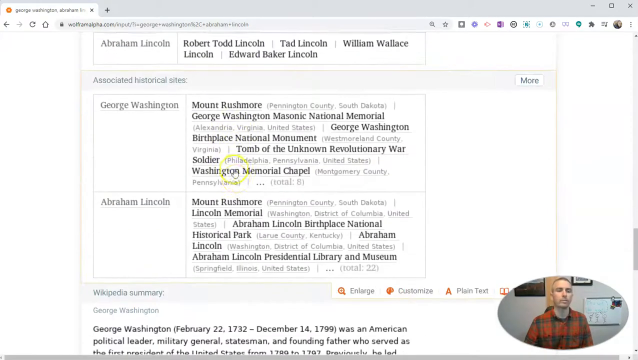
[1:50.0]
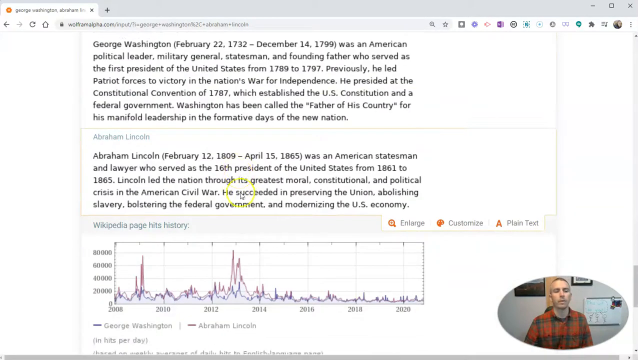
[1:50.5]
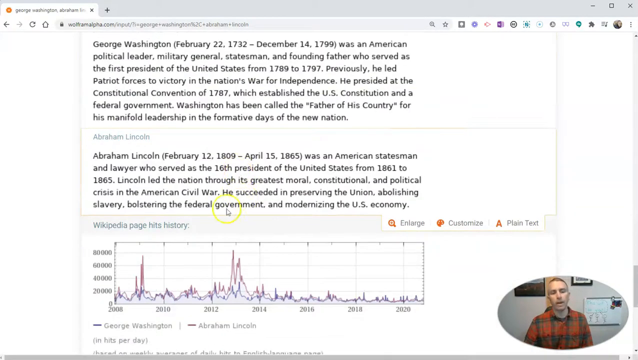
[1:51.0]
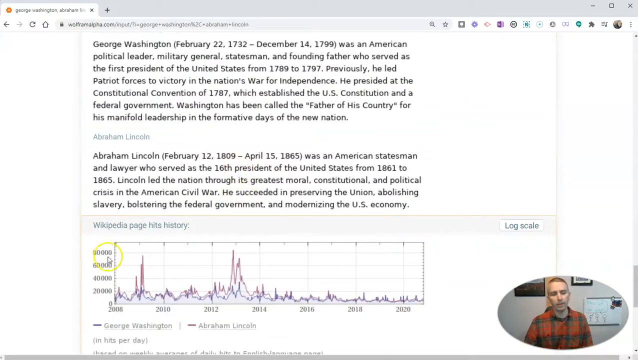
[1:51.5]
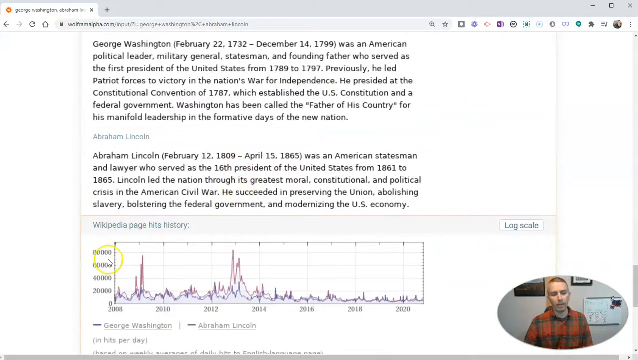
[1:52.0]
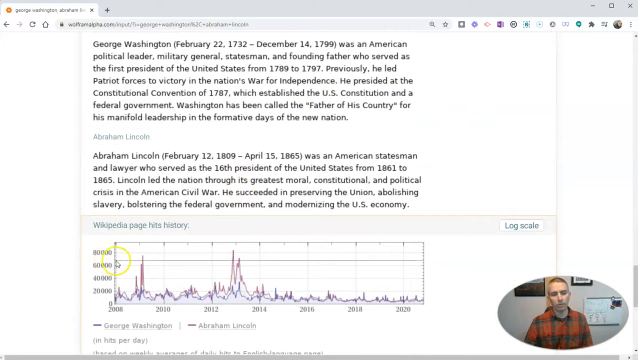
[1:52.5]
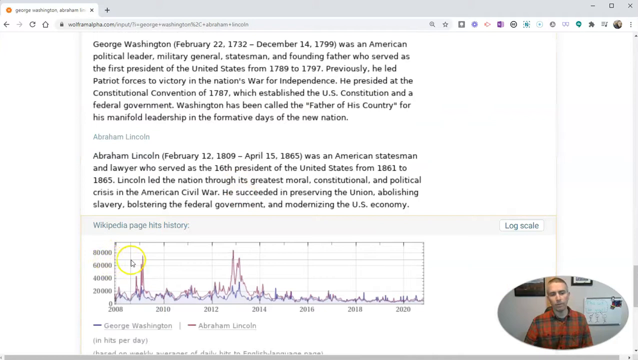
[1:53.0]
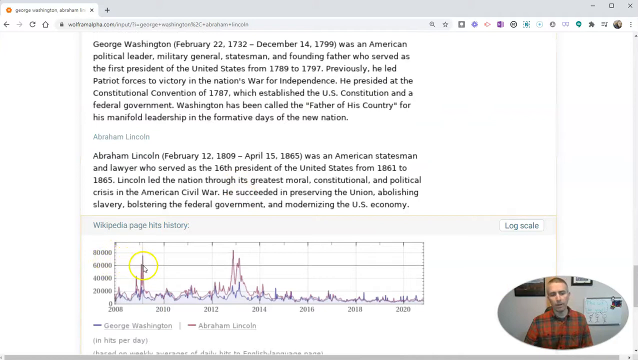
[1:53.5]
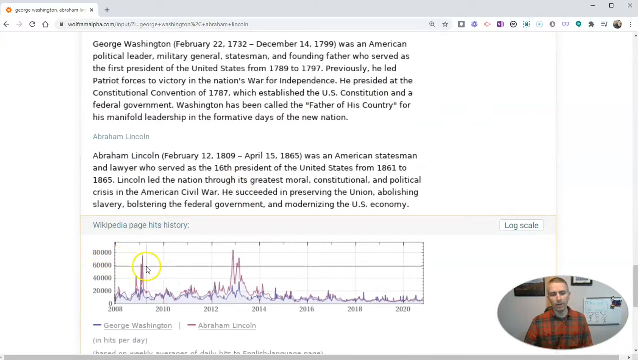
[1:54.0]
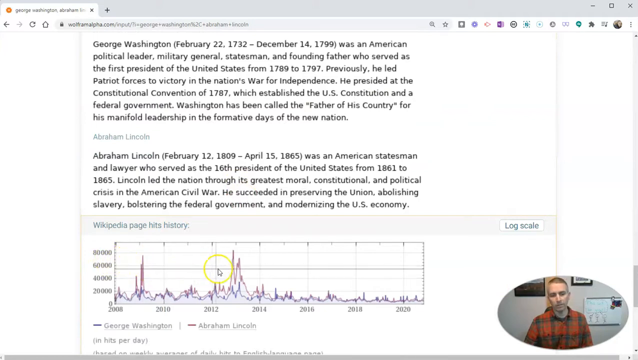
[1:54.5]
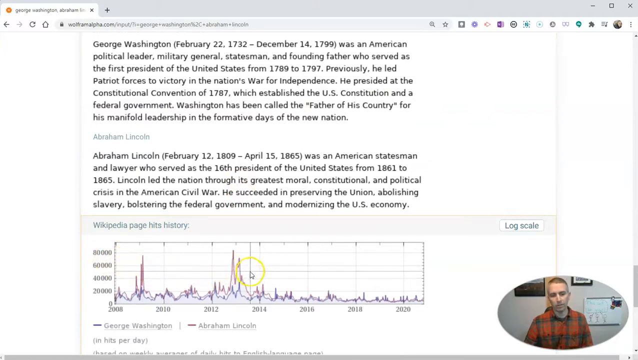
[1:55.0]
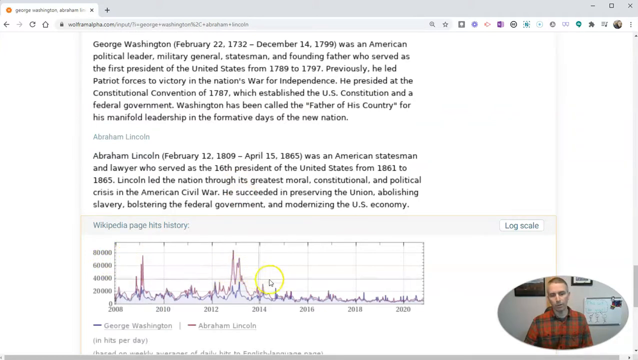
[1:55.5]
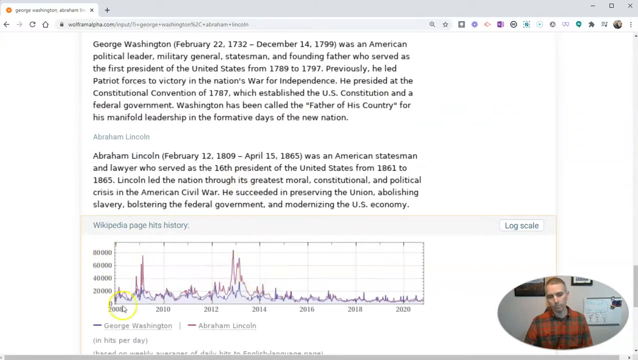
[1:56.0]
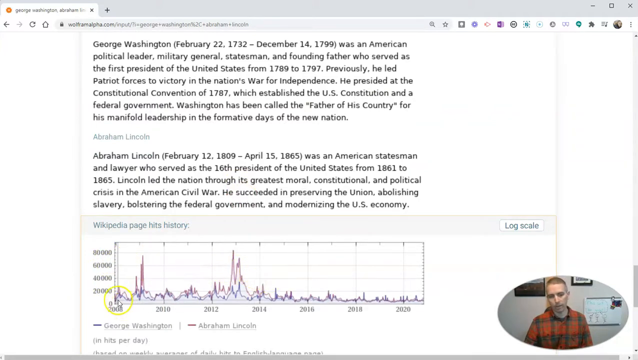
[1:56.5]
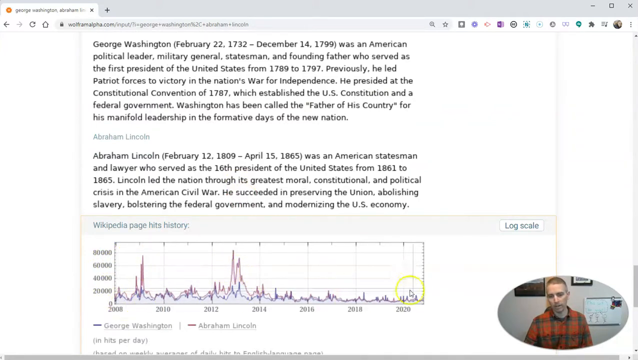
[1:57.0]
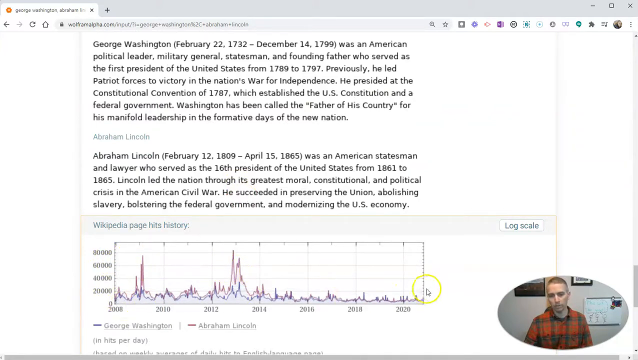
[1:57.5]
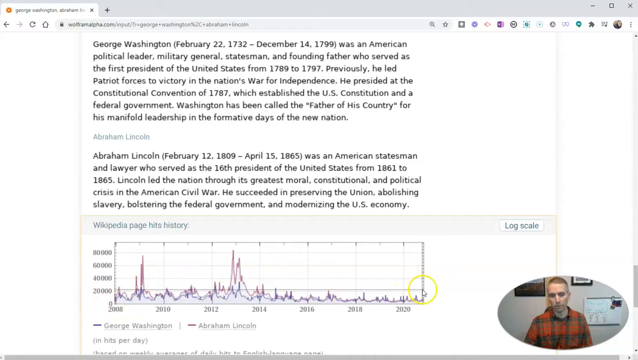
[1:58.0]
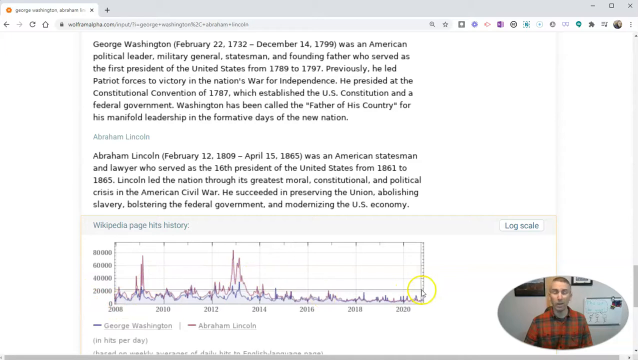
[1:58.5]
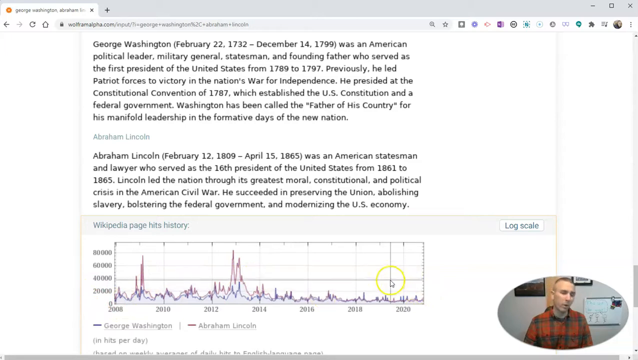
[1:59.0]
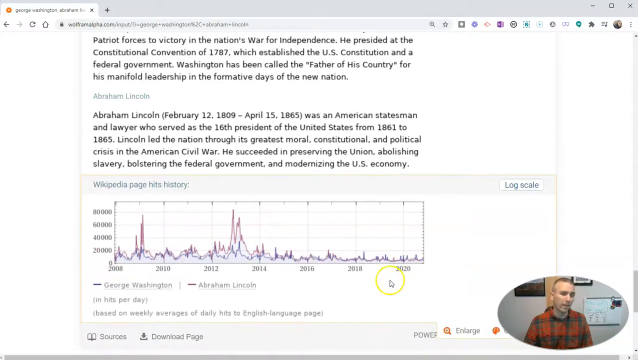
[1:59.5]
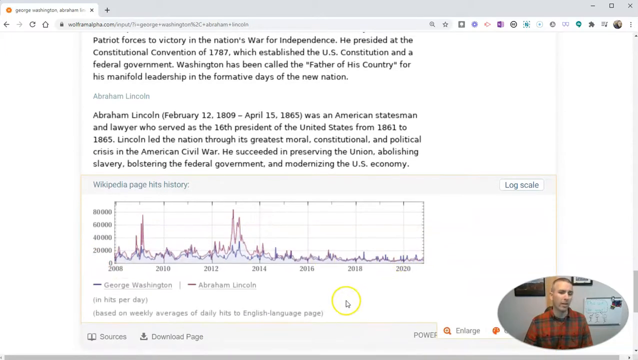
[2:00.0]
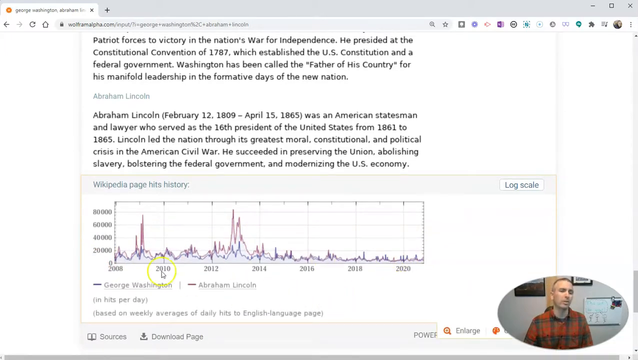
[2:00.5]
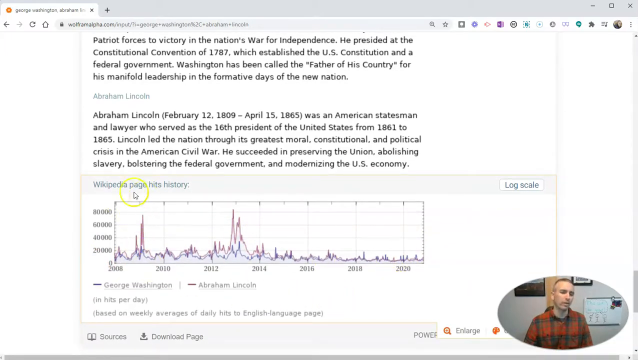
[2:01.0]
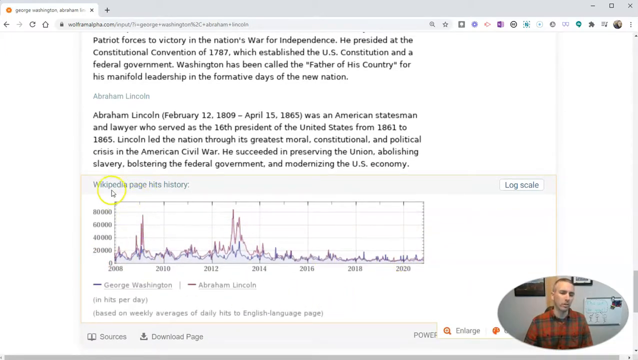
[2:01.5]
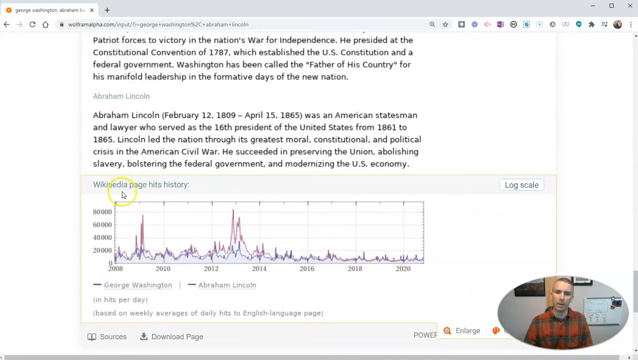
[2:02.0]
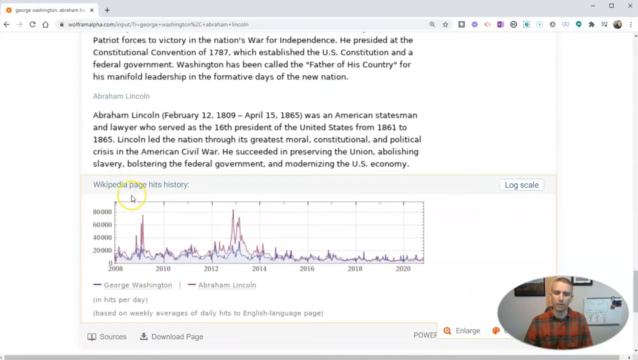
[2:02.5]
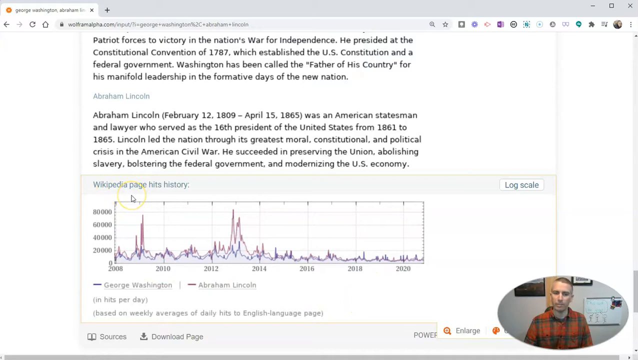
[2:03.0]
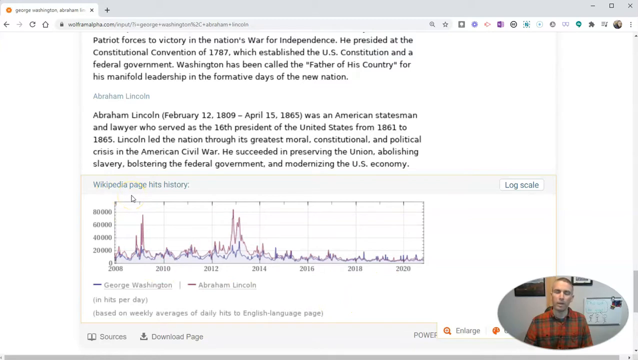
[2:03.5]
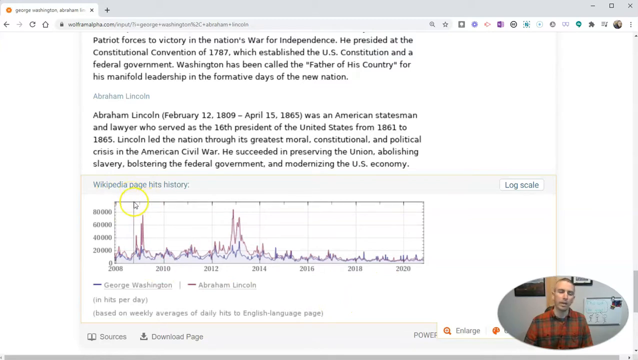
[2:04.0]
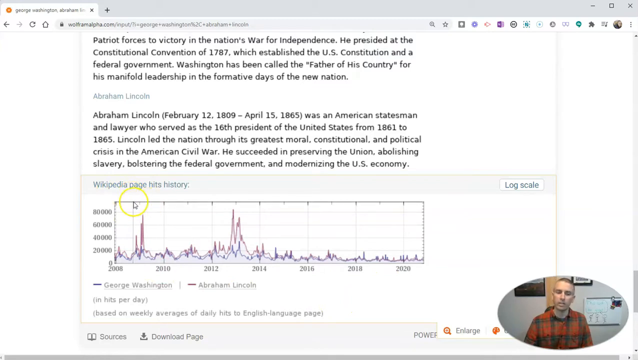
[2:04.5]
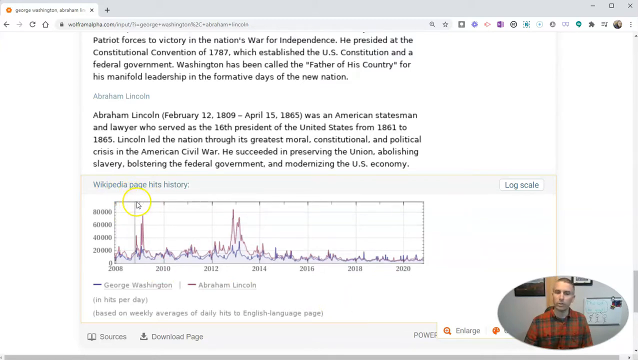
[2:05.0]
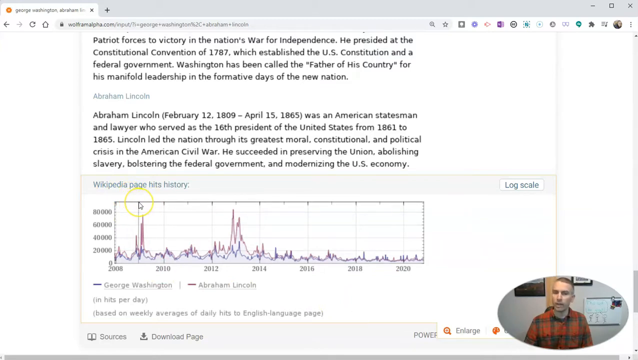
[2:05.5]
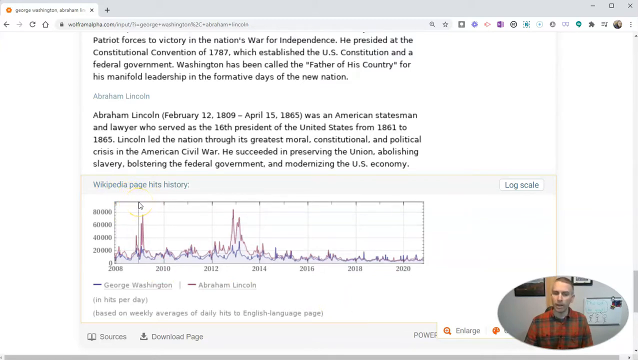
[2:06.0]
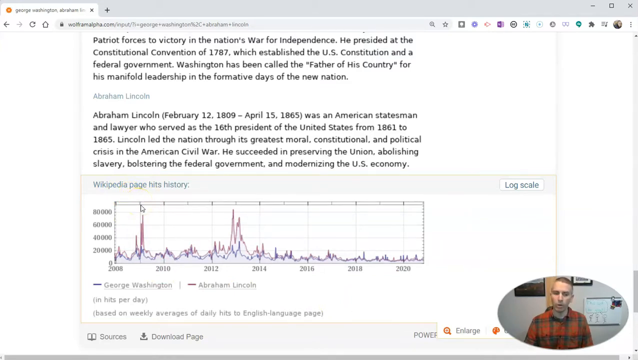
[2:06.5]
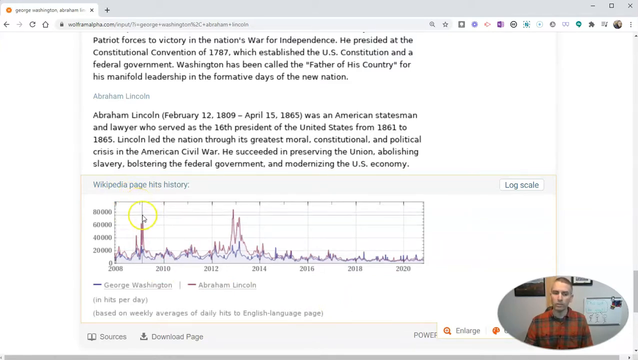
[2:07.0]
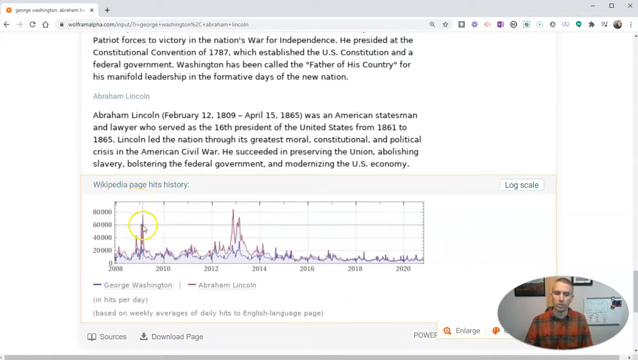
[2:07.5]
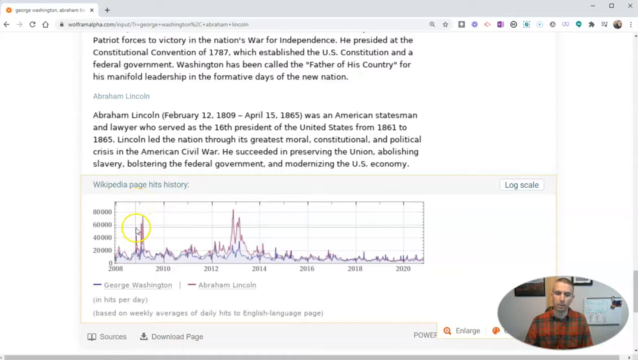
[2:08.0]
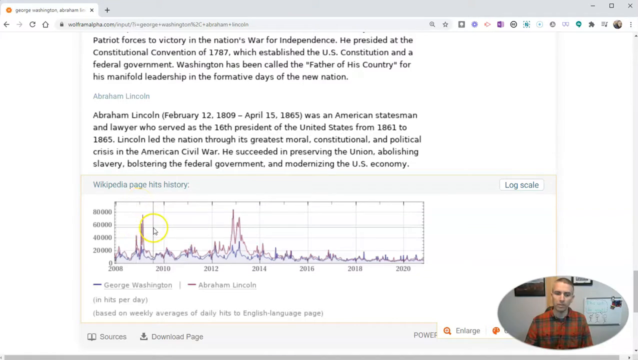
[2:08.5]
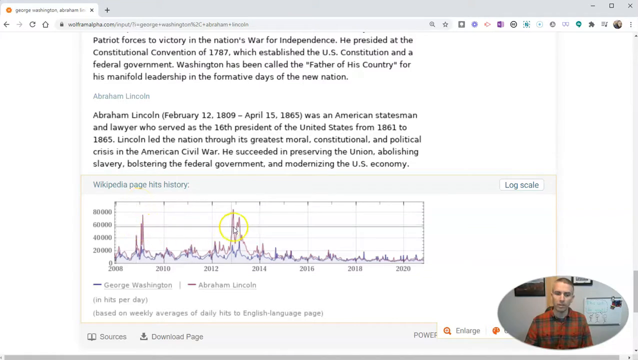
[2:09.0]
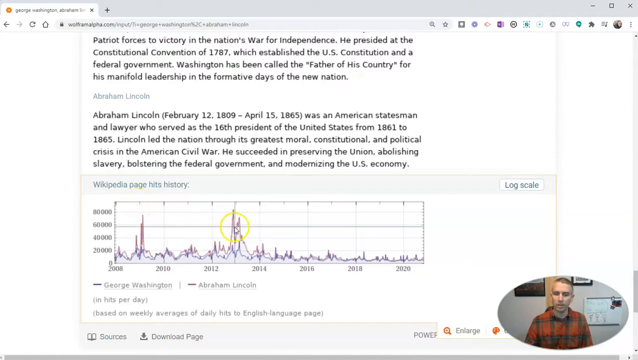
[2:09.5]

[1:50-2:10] On the Wolfram Alpha website, the side-by-side search for George Washington and Abraham Lincoln is open, and the person's video feed, showing them talking, is in the lower right corner of the screen. The mouse cursor moves around the page, which now shows the Wikipedia page hits history for George Washington and Abraham Lincoln as a line chart: George Washington is the blue line and Abraham Lincoln the red line. It looks like Abraham Lincoln has had more hits over time than George Washington. The person moves the mouse pointer to different areas inside the chart.